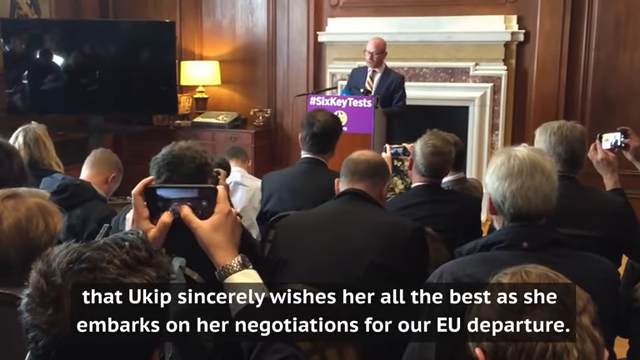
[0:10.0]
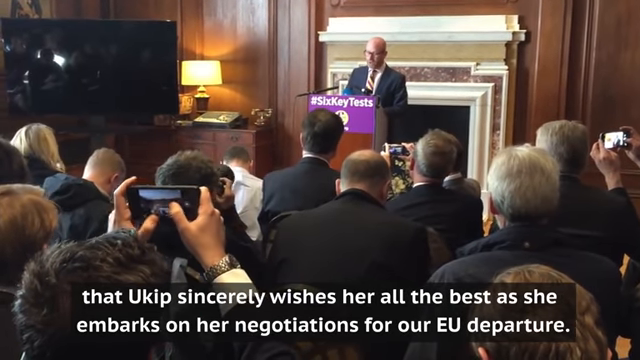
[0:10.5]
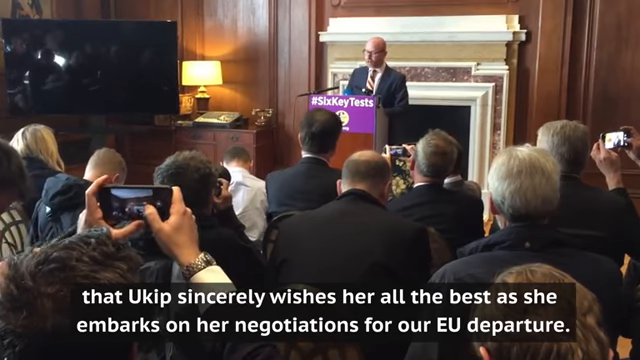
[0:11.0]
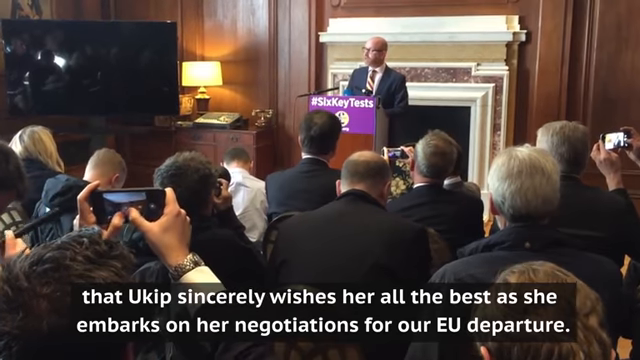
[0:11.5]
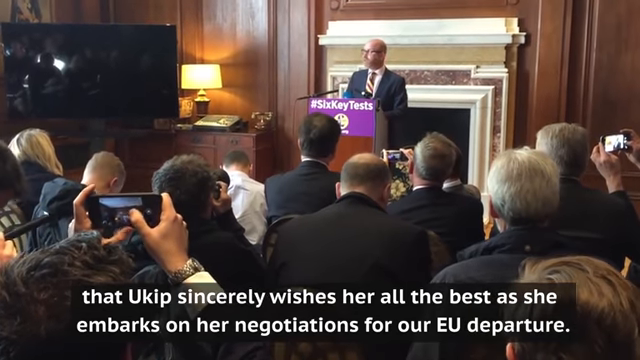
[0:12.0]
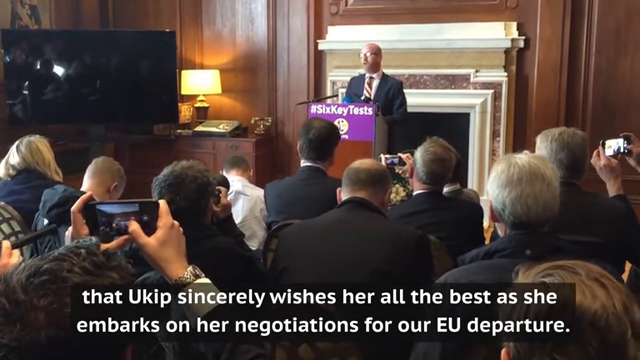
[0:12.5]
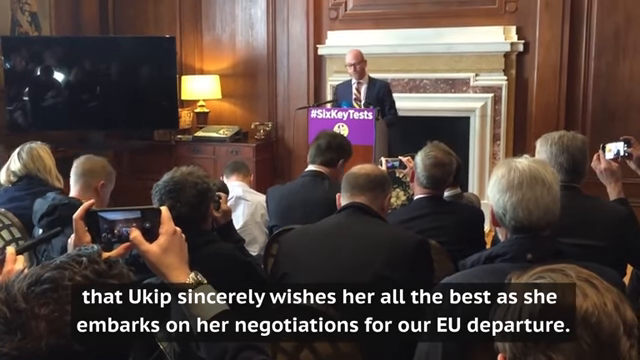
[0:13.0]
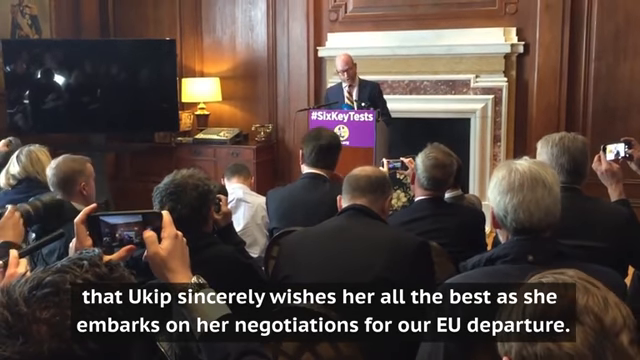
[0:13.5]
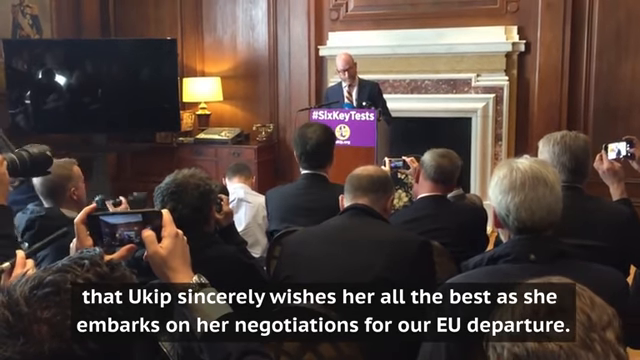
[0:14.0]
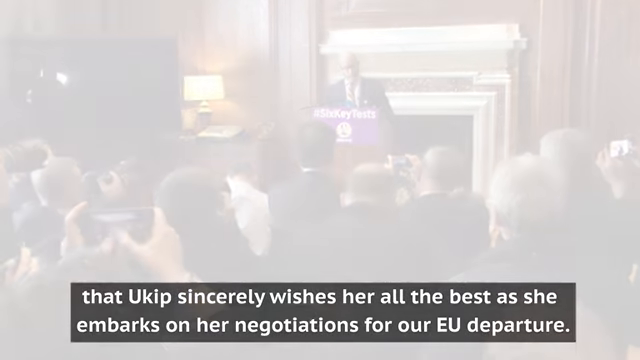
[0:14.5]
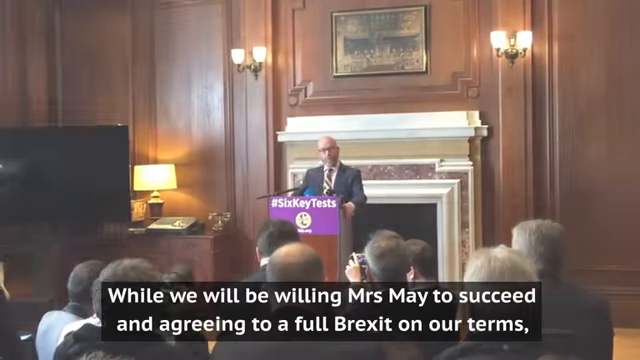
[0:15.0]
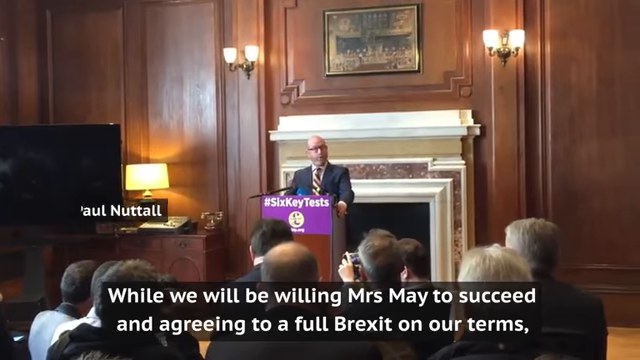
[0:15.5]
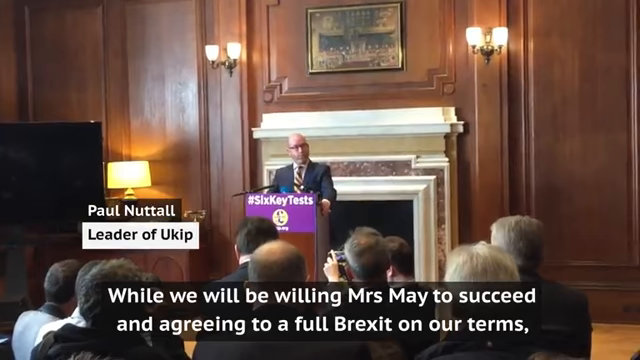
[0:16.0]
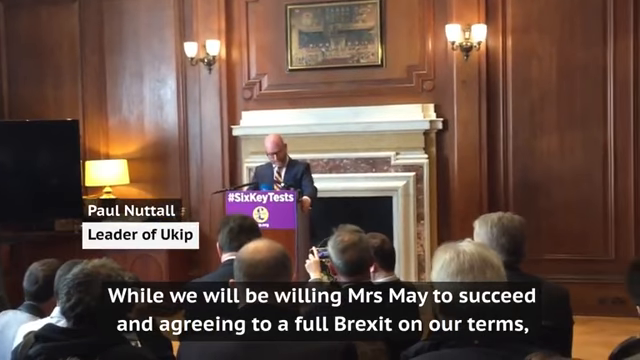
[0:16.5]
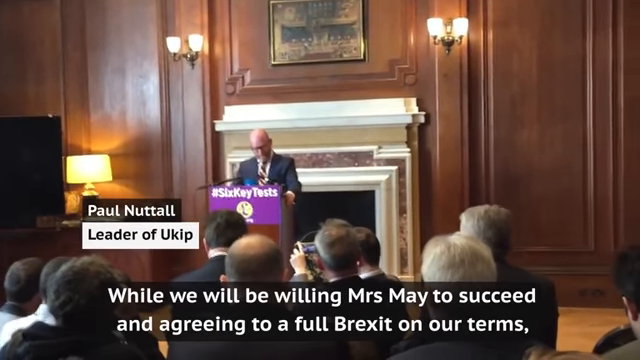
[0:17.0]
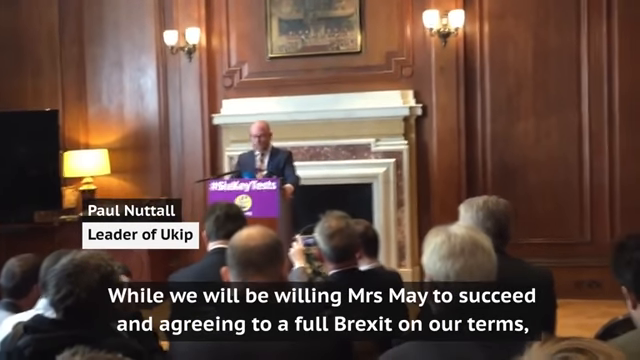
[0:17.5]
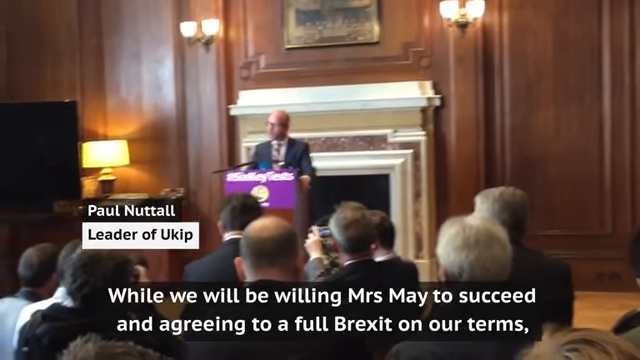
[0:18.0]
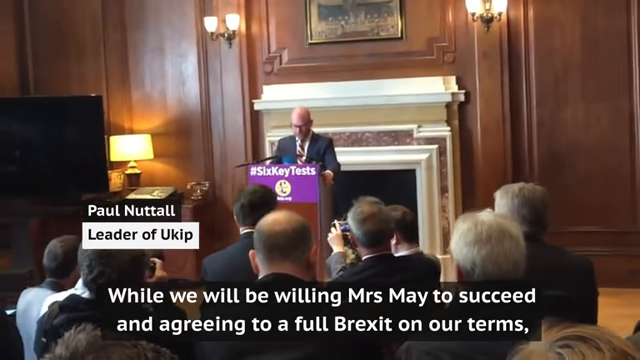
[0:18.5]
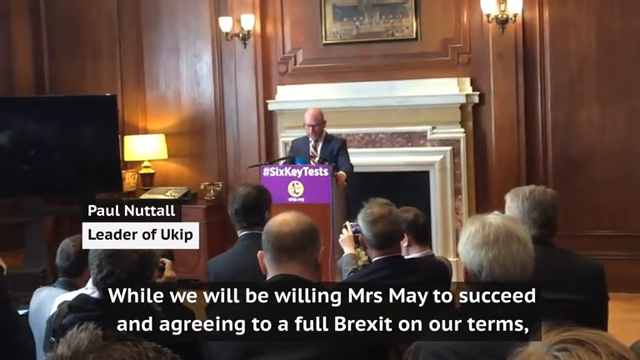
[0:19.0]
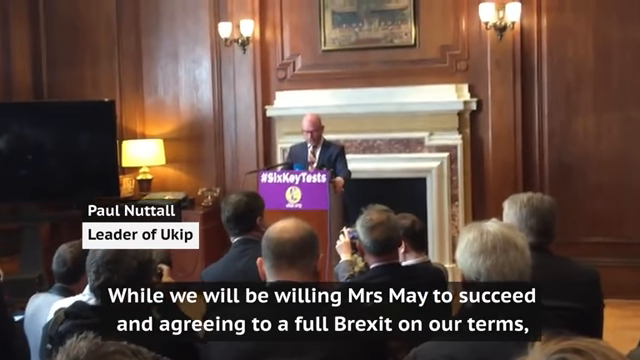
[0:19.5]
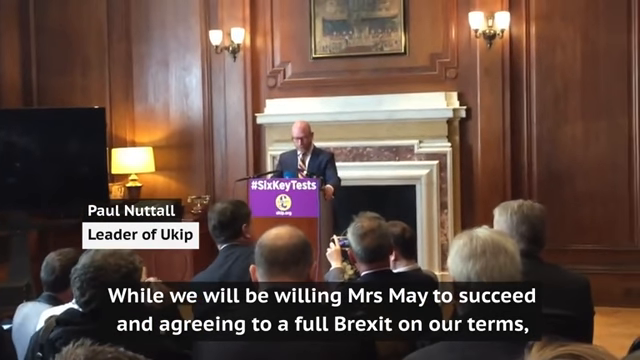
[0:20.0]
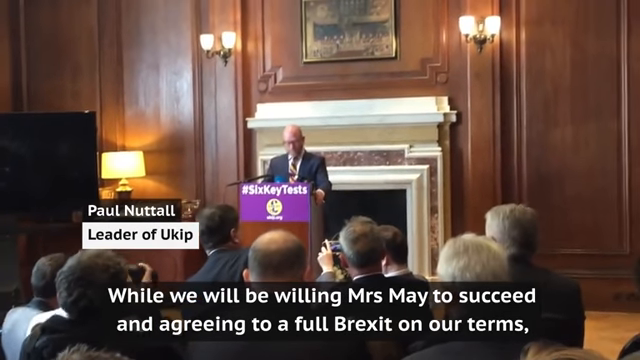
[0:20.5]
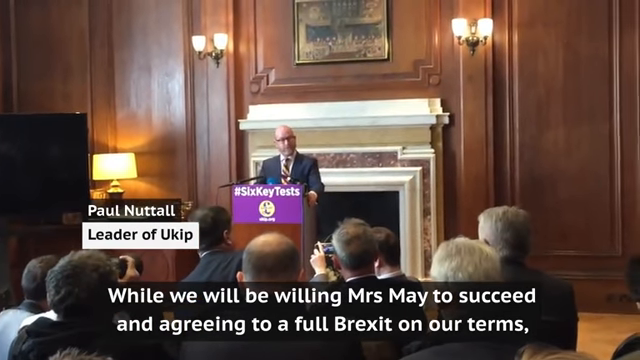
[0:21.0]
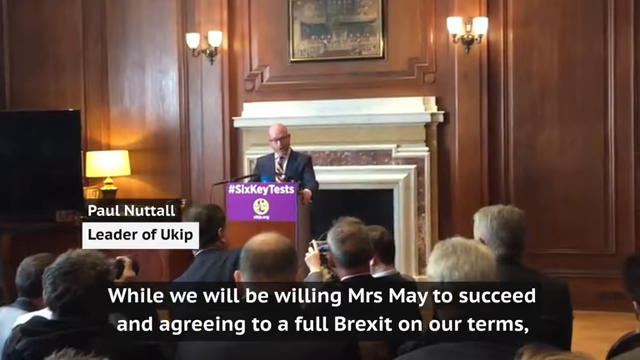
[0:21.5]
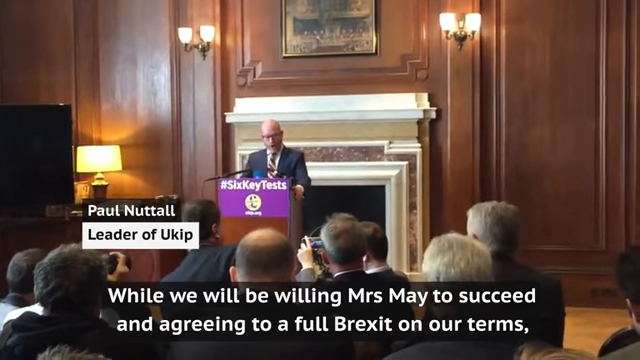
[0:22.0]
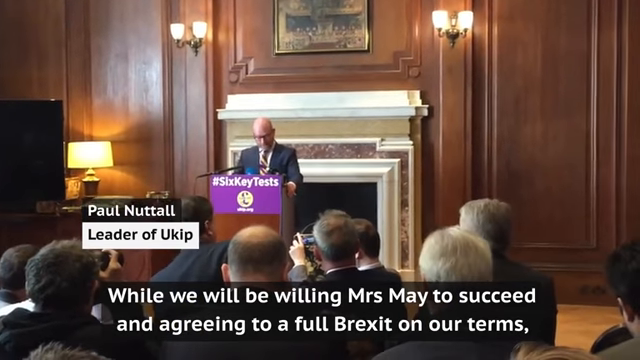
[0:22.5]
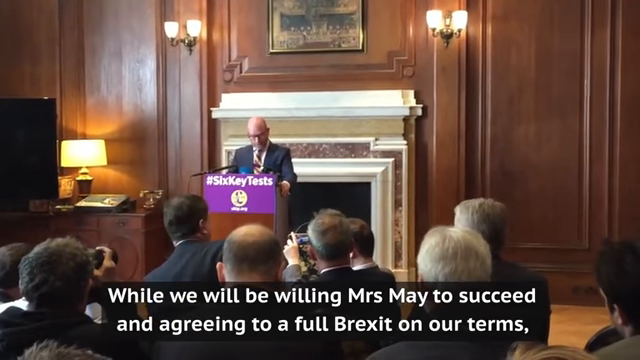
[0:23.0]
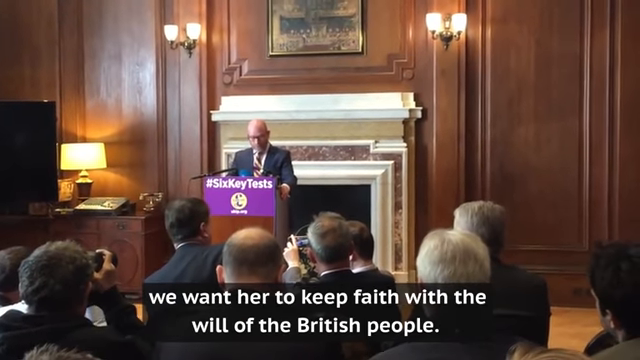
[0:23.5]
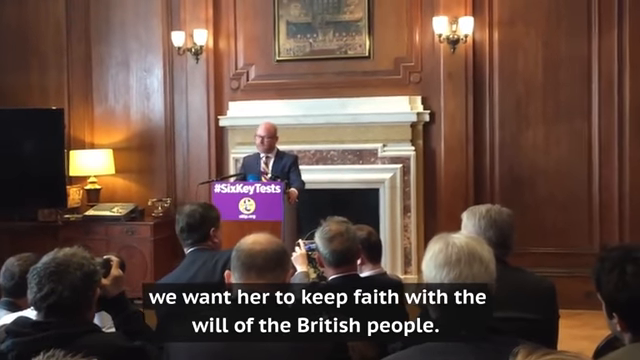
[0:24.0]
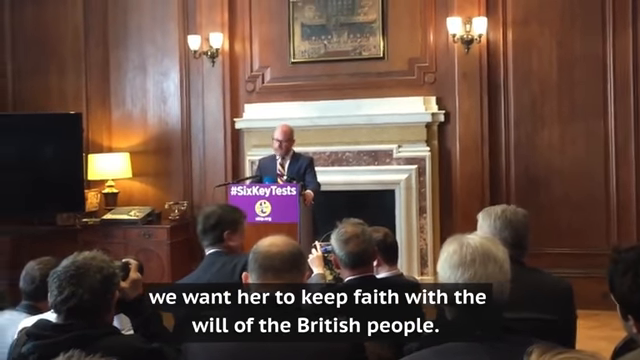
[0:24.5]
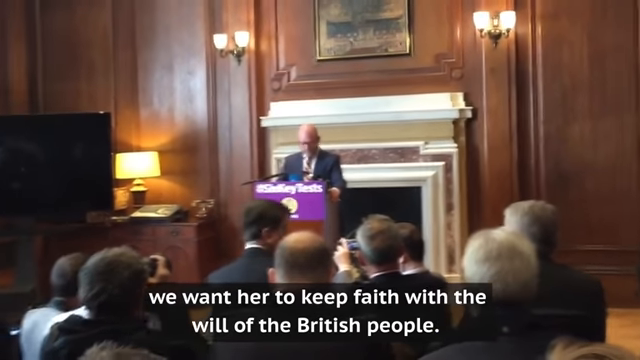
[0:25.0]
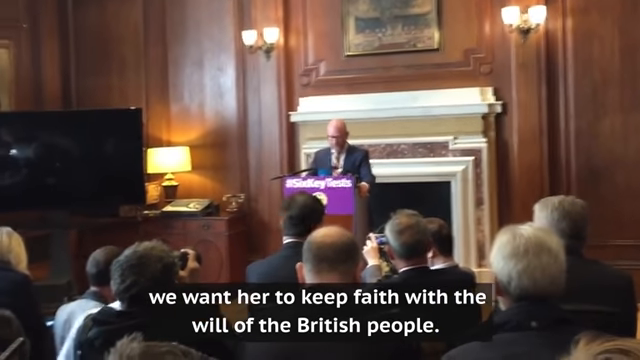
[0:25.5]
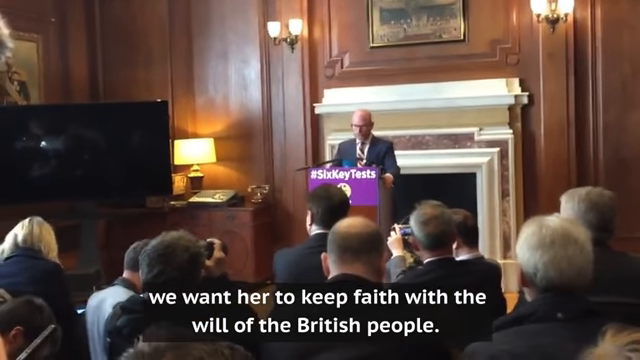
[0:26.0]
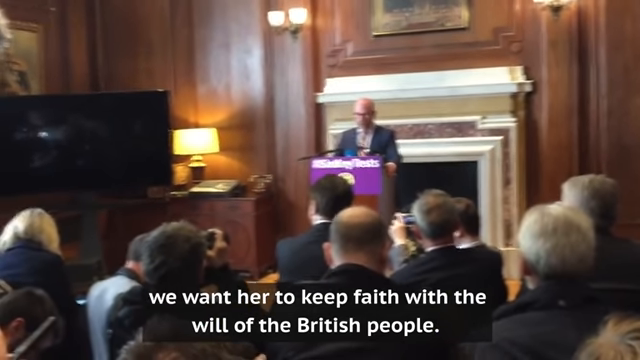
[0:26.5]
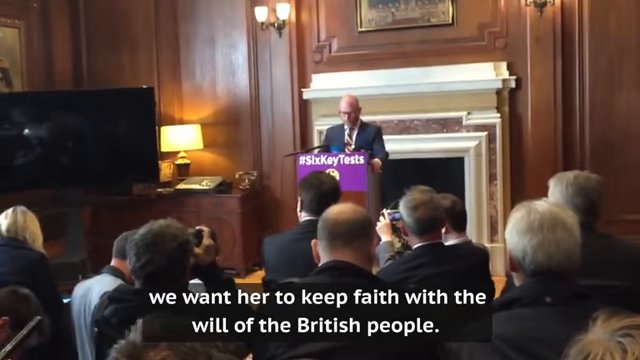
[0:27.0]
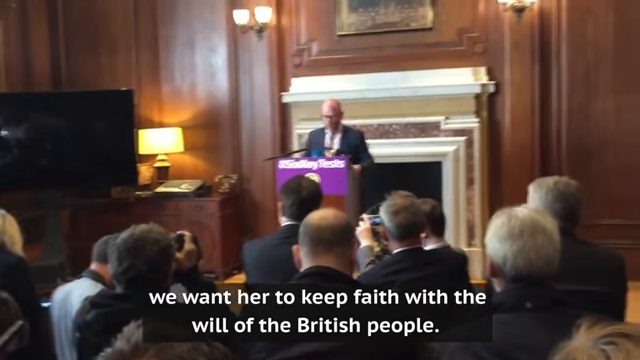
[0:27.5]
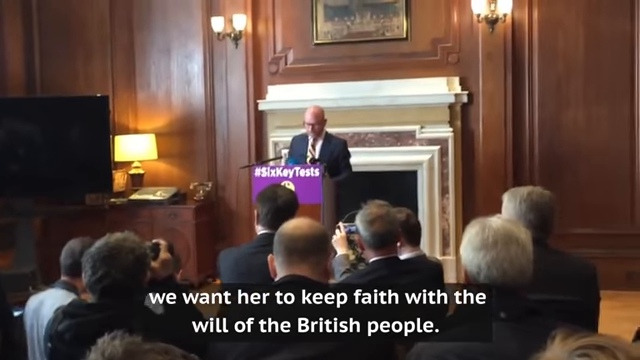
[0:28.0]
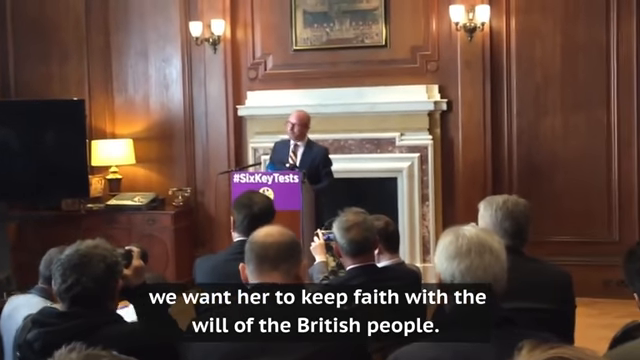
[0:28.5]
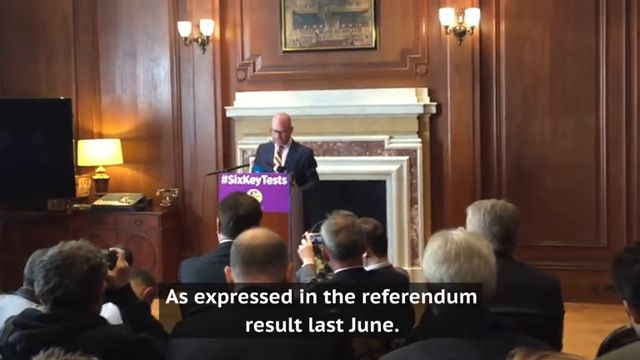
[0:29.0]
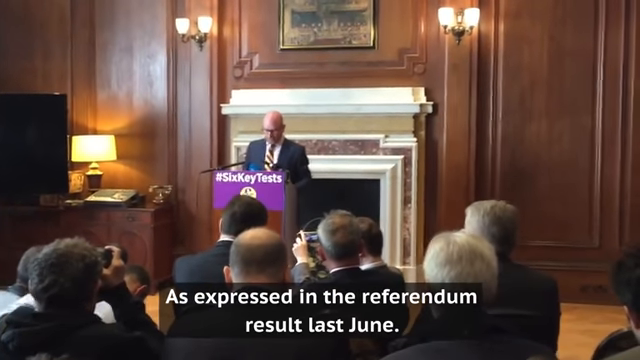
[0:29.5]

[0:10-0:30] The audience, sitting in front of a podium, is shown from behind, all wearing black coats. About three people hold mobile phones in landscape mode with both hands, shooting the speech given by the person in front of them. A tall, bald-headed man in a black suit stands at the podium giving the speech. The podium is brown with "#sixkeytest" written in white on a violet background at its top, and the mic is attached on the left side. Behind the podium, a white fireplace is on a wooden-paneled wall. A black TV is on the right side of the screen, with a yellow glowing table lamp to its right. The audience raises their cameras and records the speech. A scroll runs at the bottom of the screen, with white text in two lines on a transparent black background. The man's name appears near the podium as "Paul Nuttall, leader of UKIP" in black and white text and background, appearing and then disappearing. The camera moves slightly from left to right and right to left.